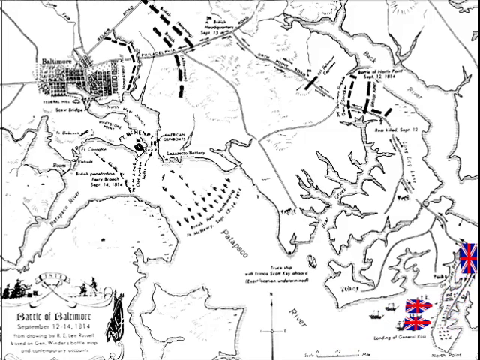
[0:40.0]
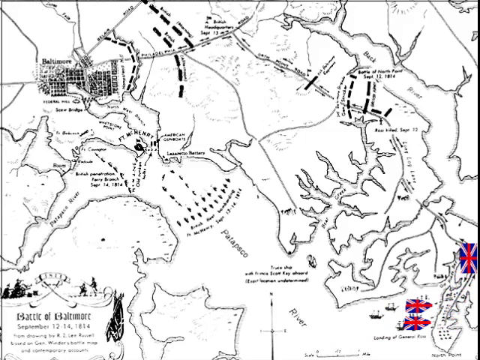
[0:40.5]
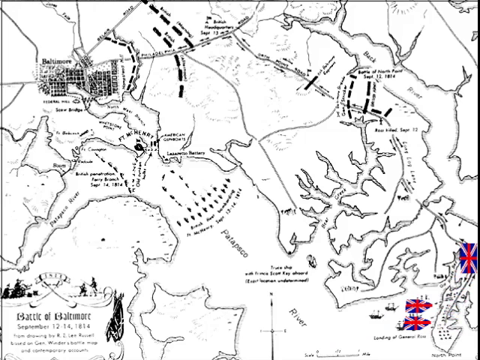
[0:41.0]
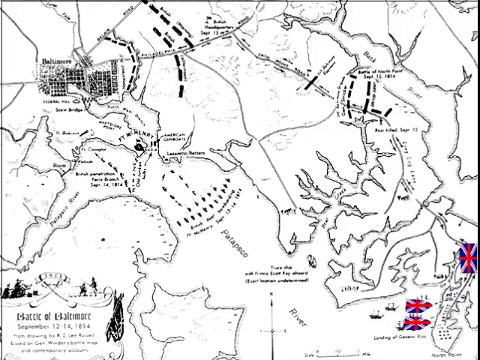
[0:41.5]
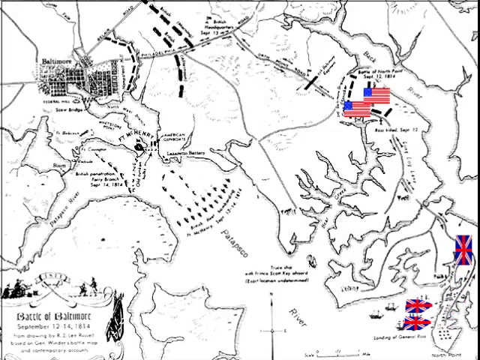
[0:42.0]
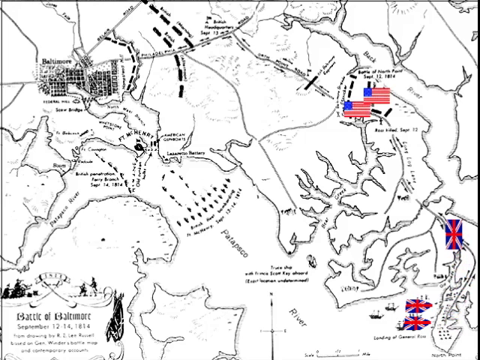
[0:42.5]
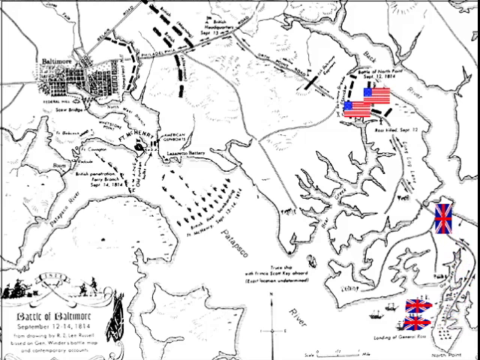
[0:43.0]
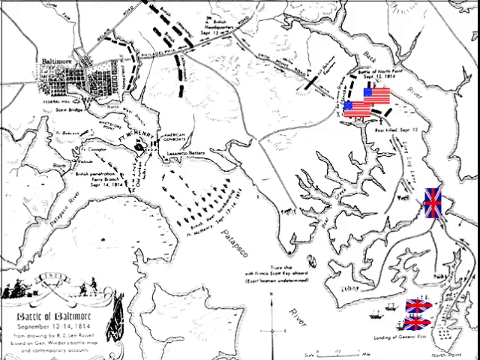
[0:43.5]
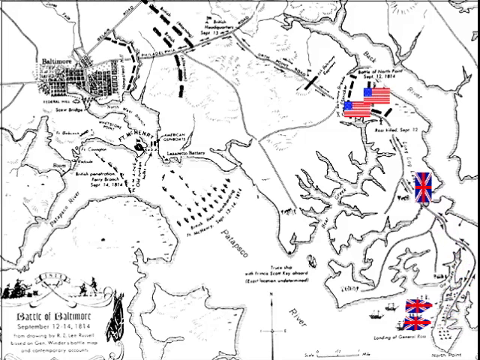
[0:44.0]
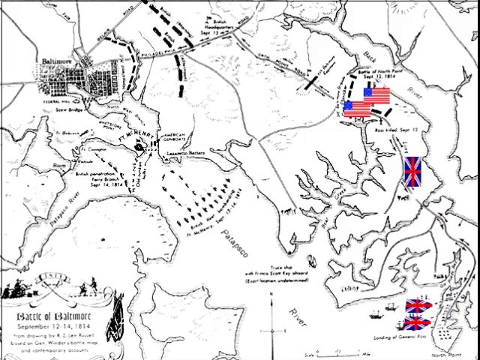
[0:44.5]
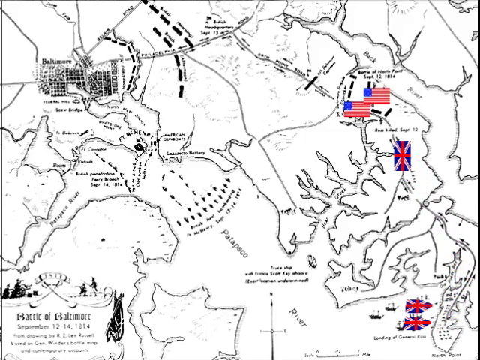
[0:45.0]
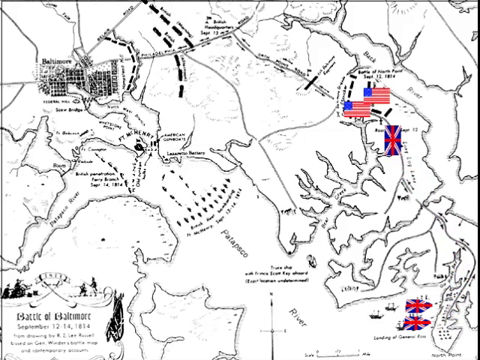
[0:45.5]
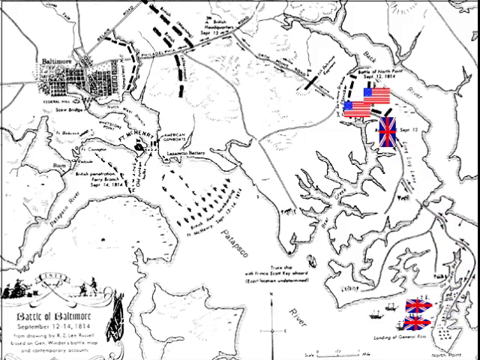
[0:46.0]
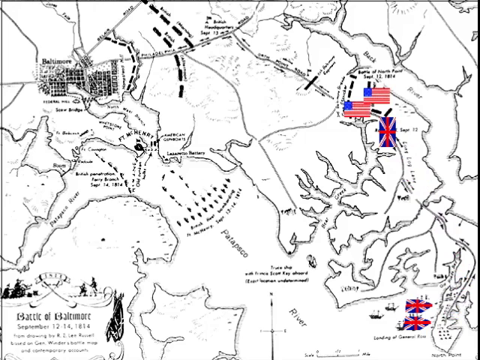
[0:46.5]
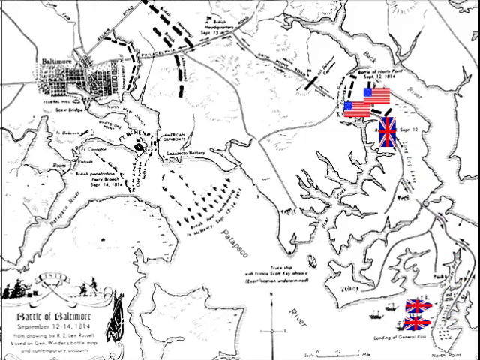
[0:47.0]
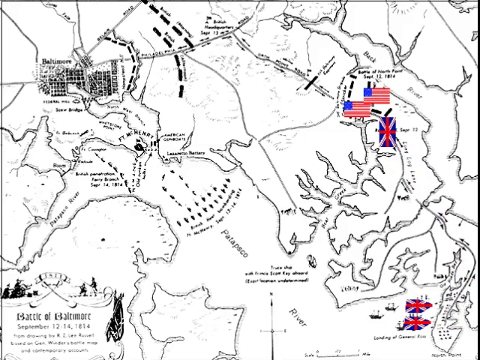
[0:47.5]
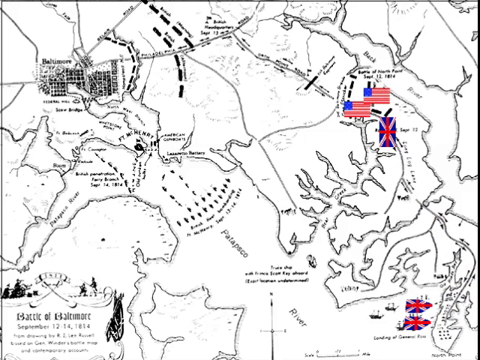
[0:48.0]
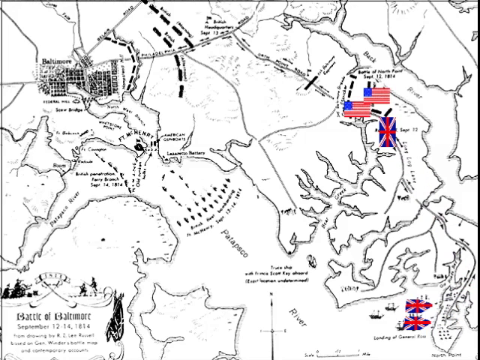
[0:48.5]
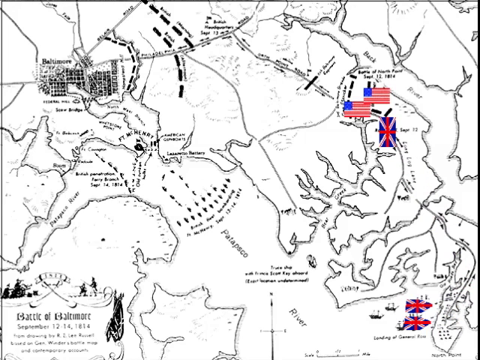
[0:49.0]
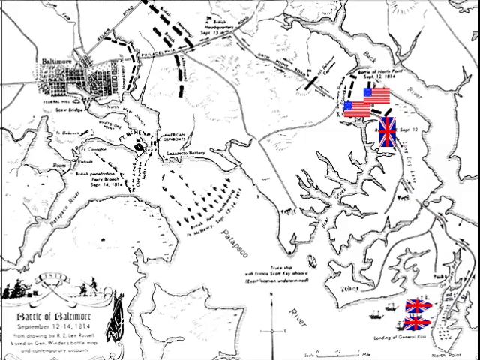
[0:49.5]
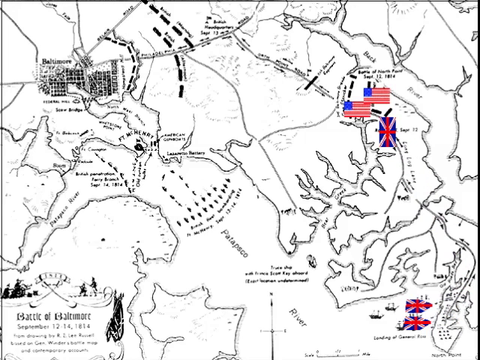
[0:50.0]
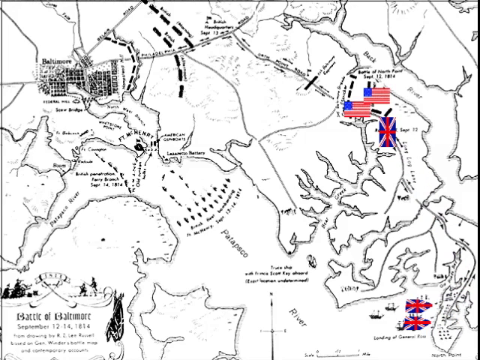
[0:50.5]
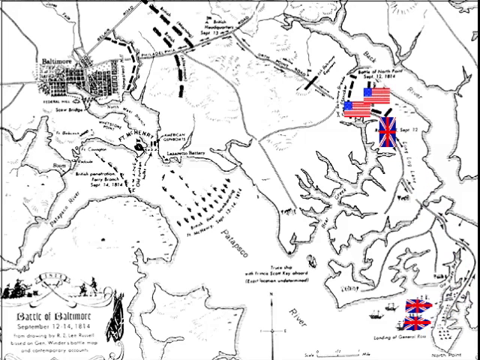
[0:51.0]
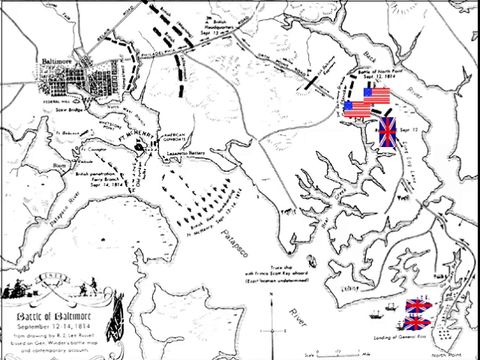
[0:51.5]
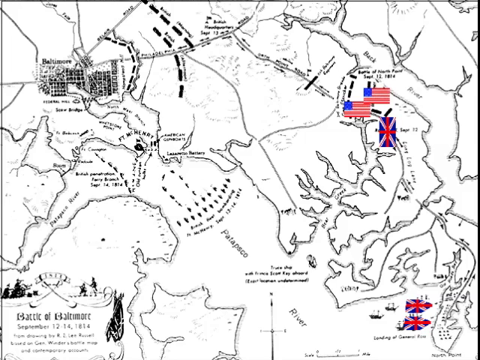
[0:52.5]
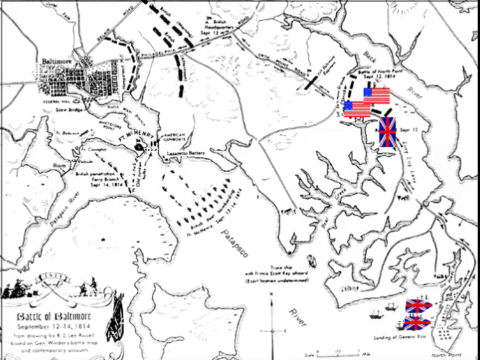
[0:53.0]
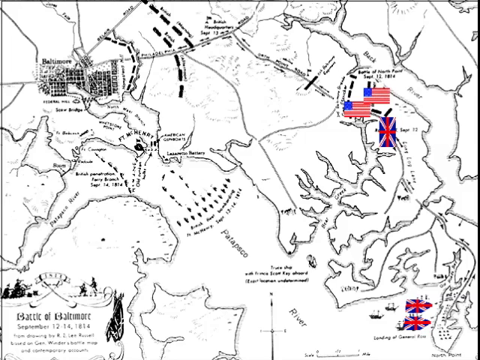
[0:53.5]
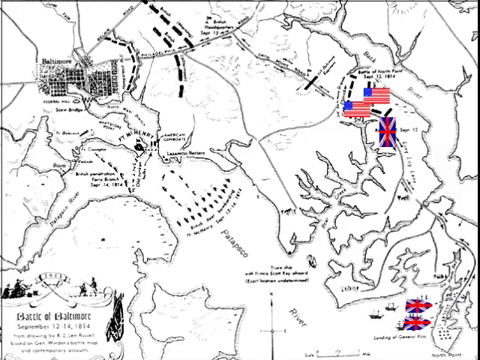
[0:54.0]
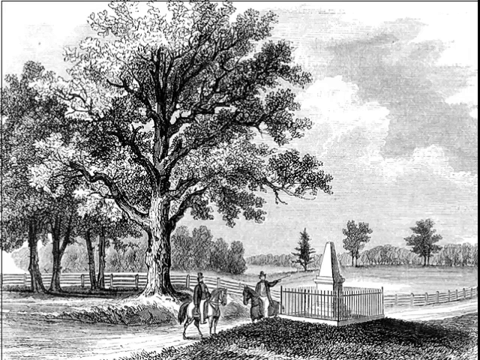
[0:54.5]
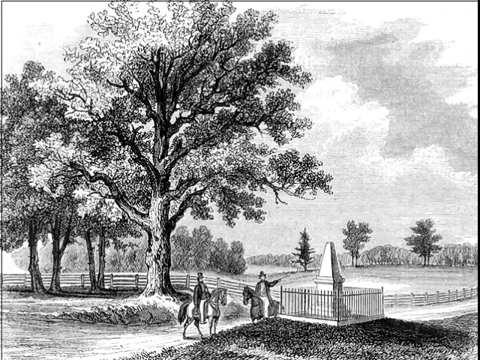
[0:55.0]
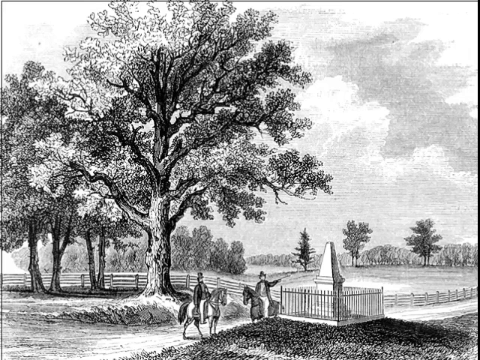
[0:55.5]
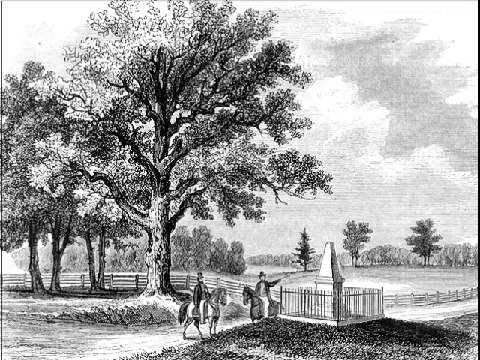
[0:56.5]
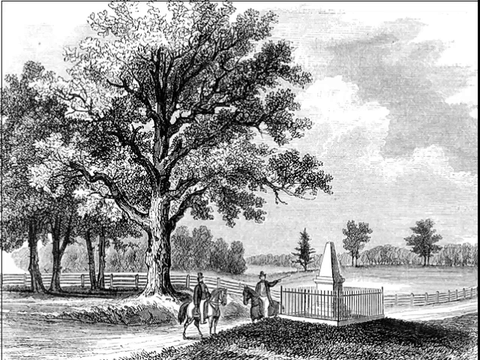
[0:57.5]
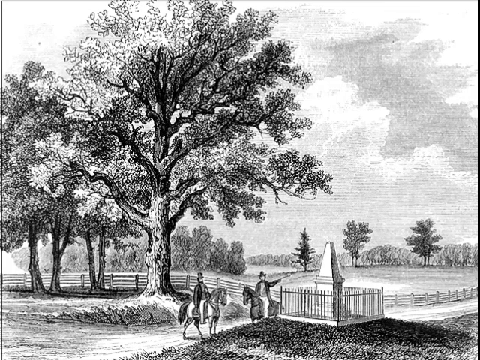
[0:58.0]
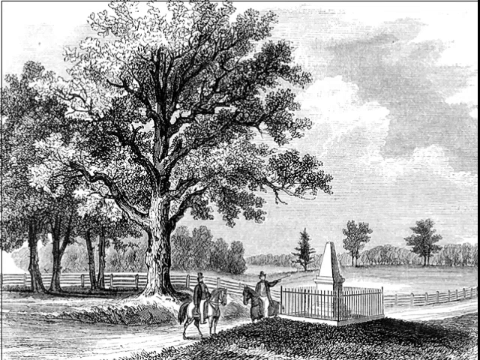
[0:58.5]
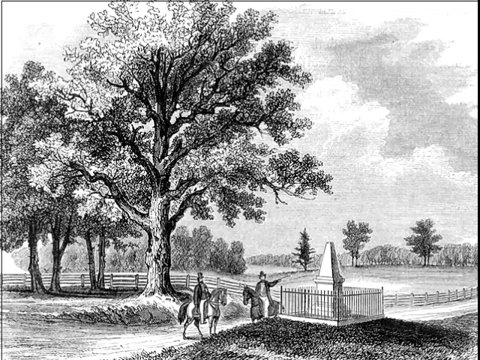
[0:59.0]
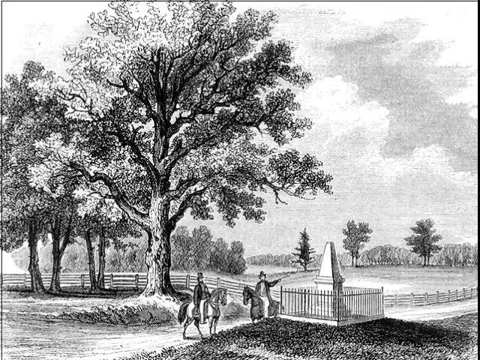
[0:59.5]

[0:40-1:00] An aerial view shows a drawn map of landmasses with a body of water and arteries off it that extend inland, apparently the Patapasco River; the map shows the area where the Battle of Baltimore took place. Boats are in a harbor near the right-hand coast. Flags representing Great Britain move across the ships onto land, further inland, and then approach two American flags positioned higher, north of the spot where they touched land. The video transitions to a drawing done in pencil and shades. A fenced area protects a short, pyramid-shaped monument, and a fence behind it surrounds some cleared land that is surrounded by woods. Two mature trees are in the foreground. Two men in top hats and overcoats are atop horses.